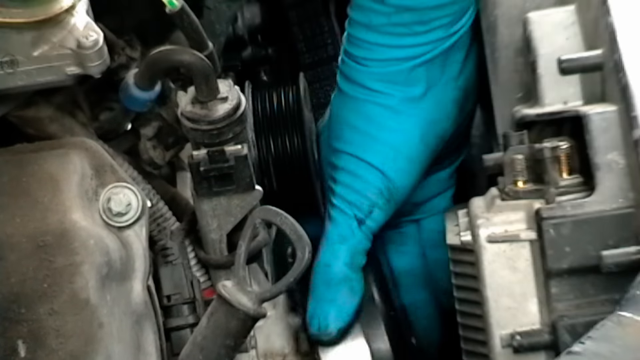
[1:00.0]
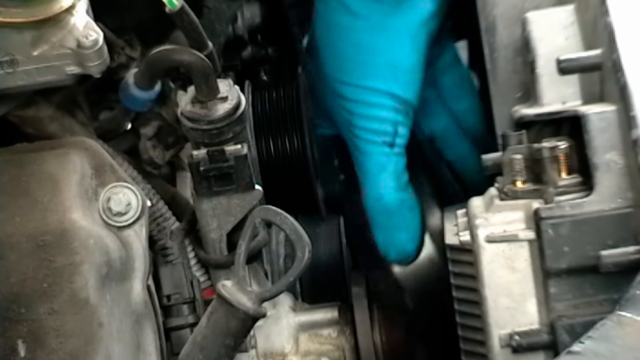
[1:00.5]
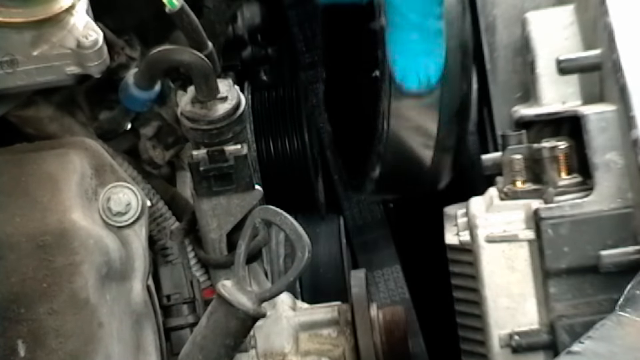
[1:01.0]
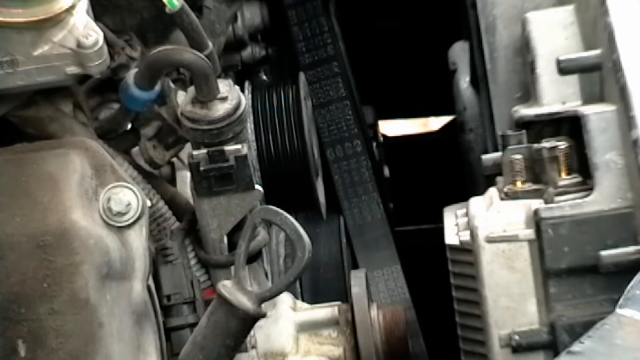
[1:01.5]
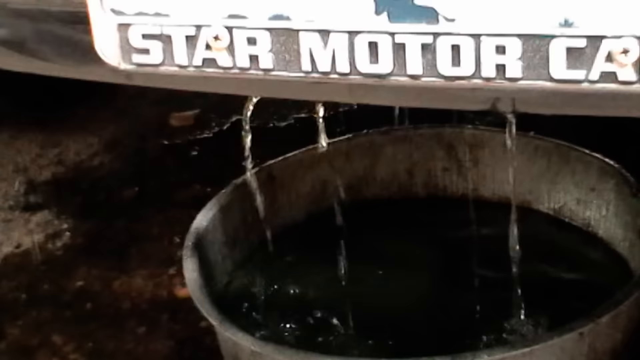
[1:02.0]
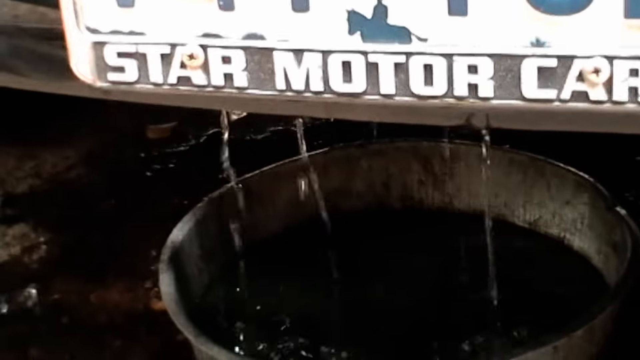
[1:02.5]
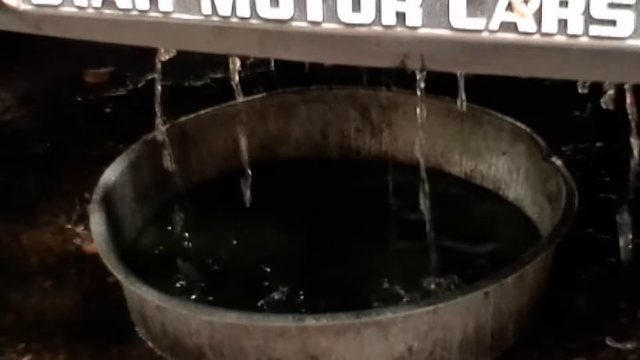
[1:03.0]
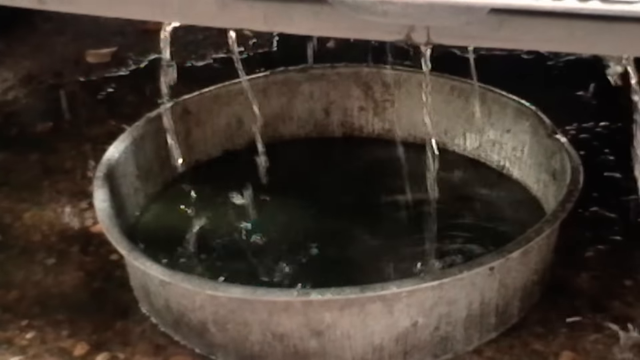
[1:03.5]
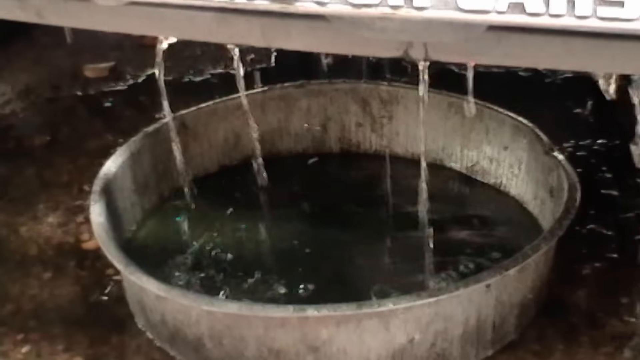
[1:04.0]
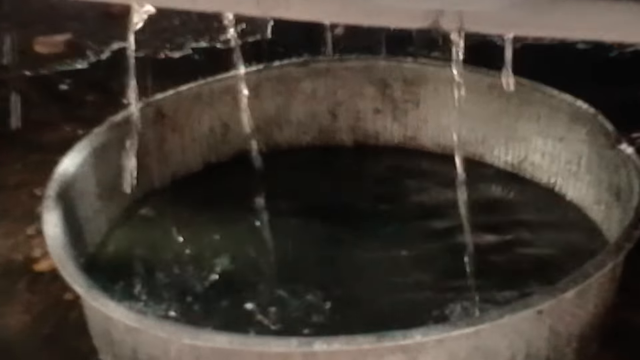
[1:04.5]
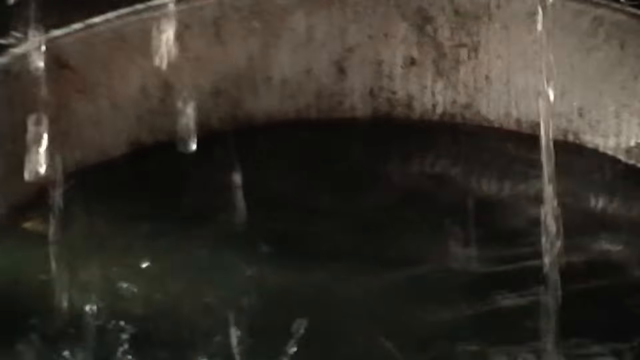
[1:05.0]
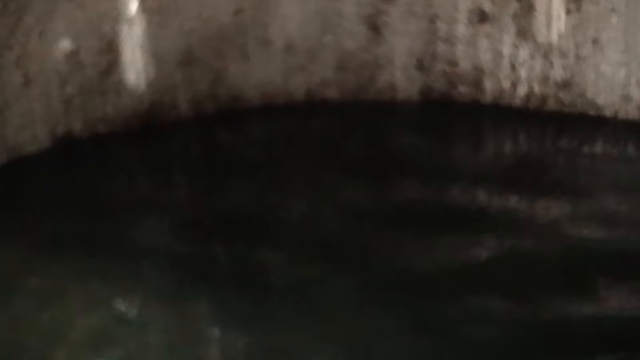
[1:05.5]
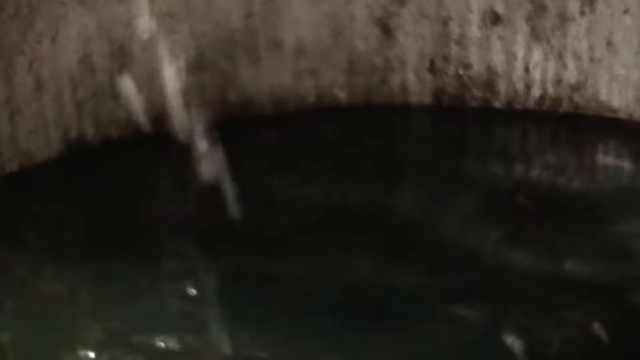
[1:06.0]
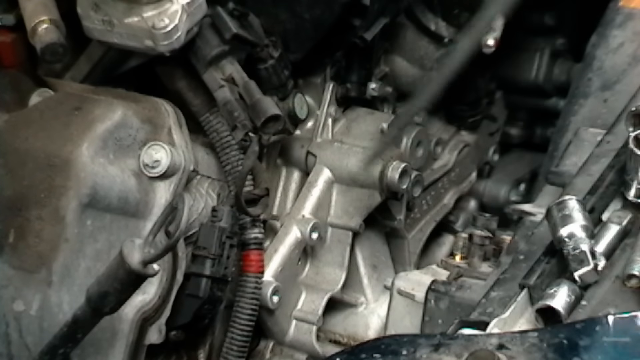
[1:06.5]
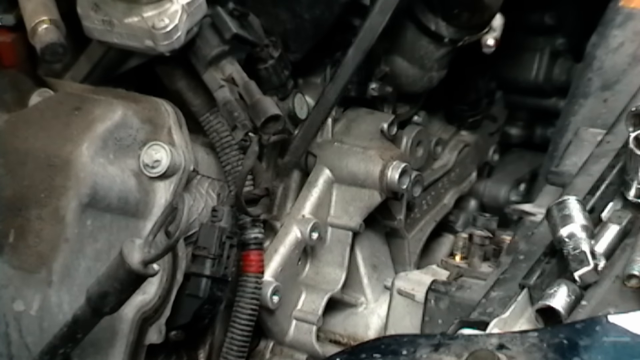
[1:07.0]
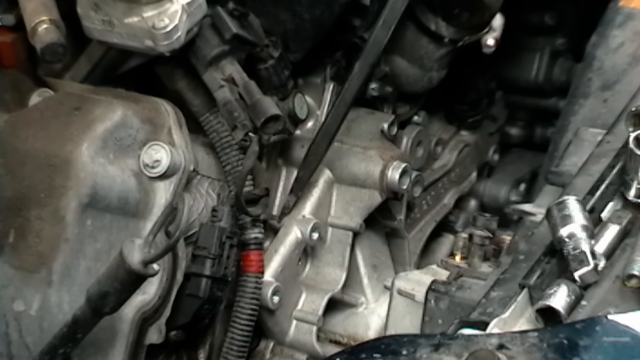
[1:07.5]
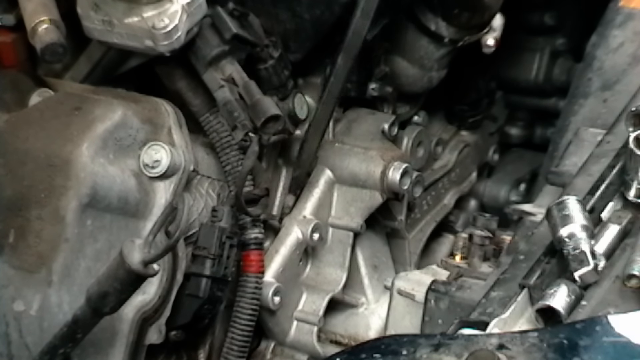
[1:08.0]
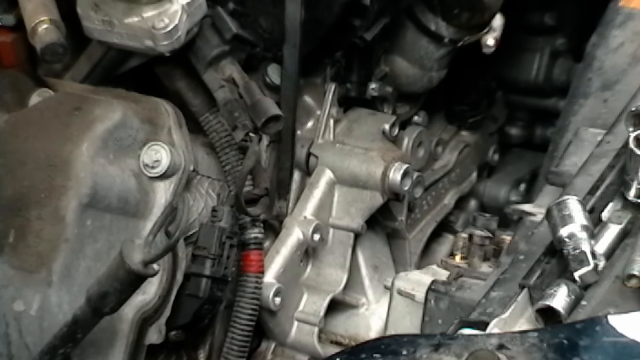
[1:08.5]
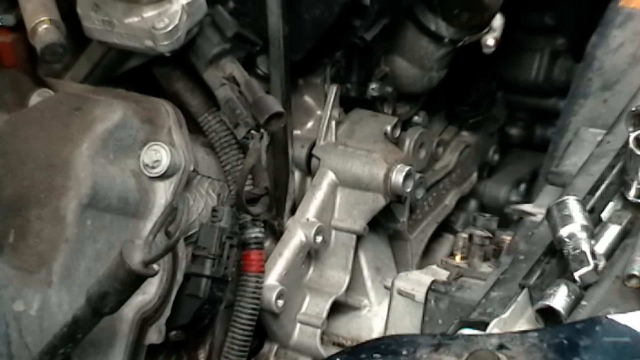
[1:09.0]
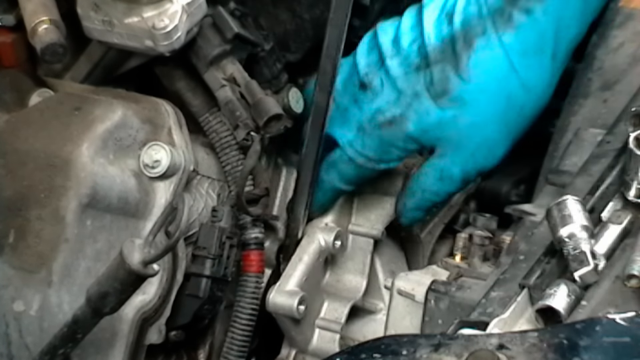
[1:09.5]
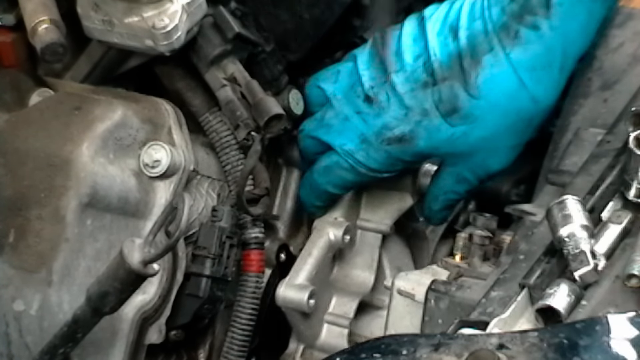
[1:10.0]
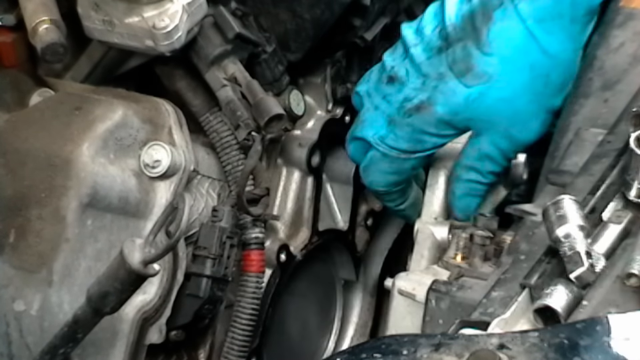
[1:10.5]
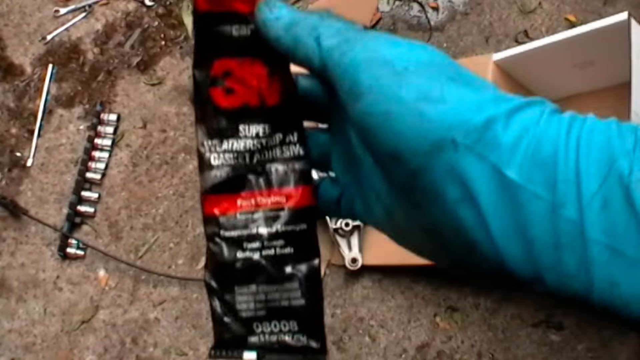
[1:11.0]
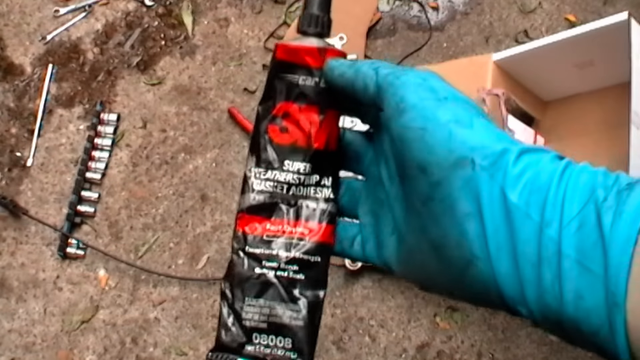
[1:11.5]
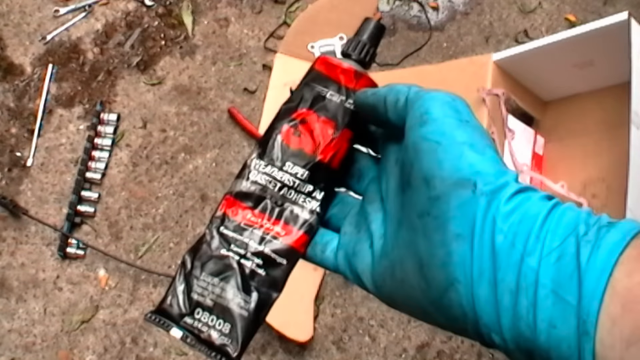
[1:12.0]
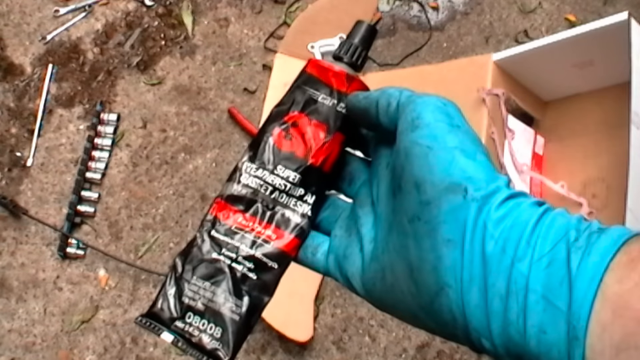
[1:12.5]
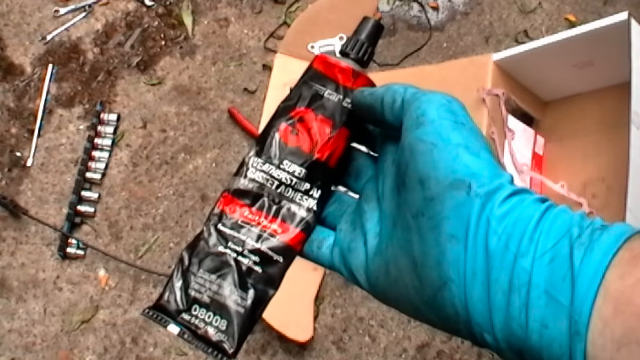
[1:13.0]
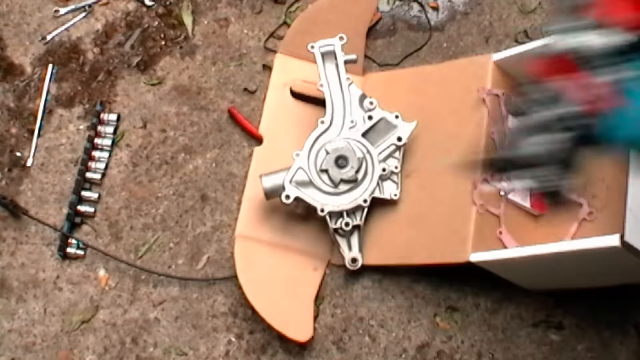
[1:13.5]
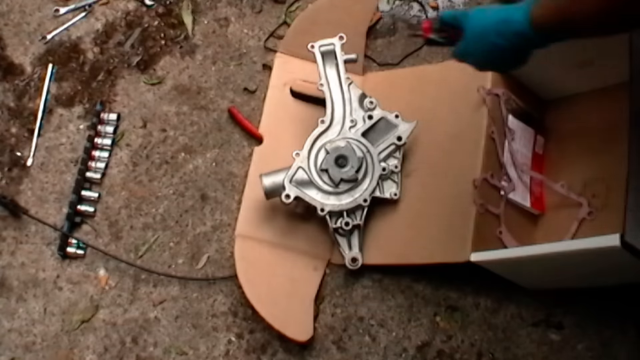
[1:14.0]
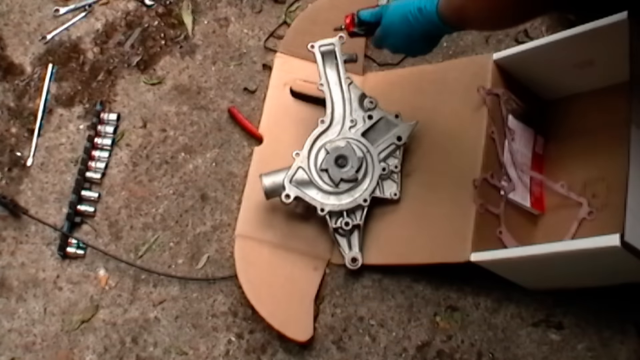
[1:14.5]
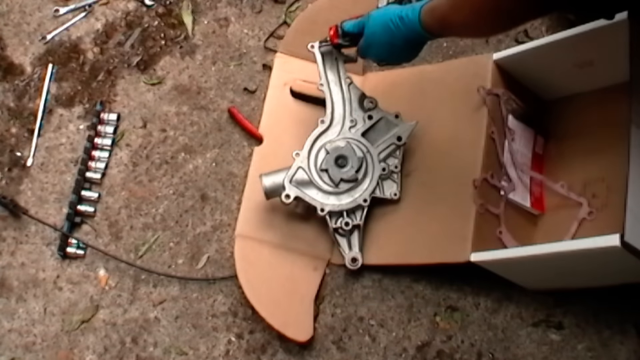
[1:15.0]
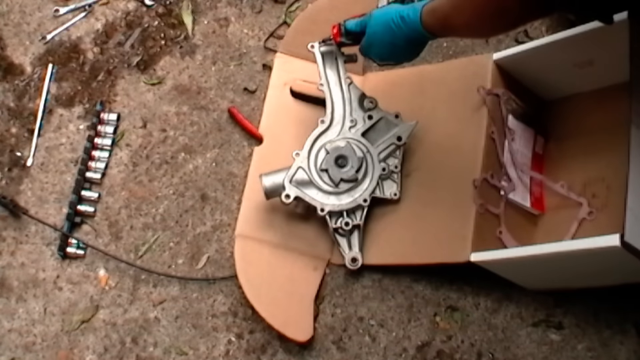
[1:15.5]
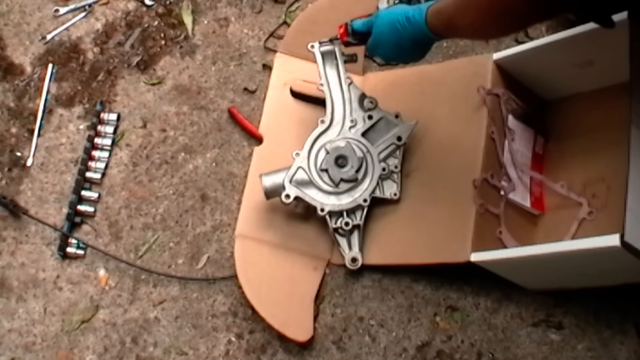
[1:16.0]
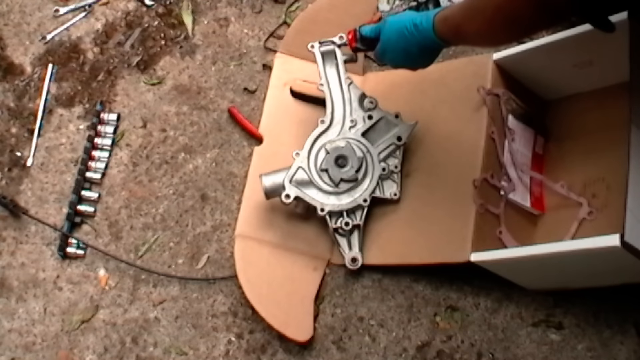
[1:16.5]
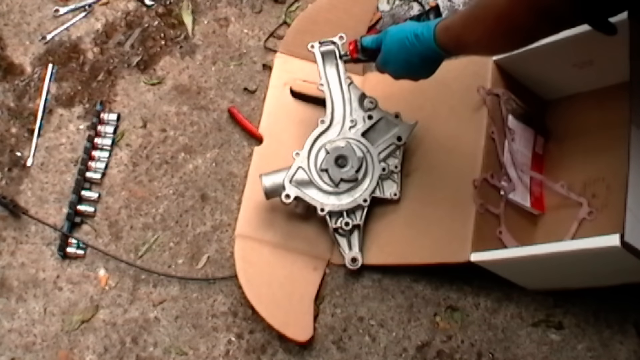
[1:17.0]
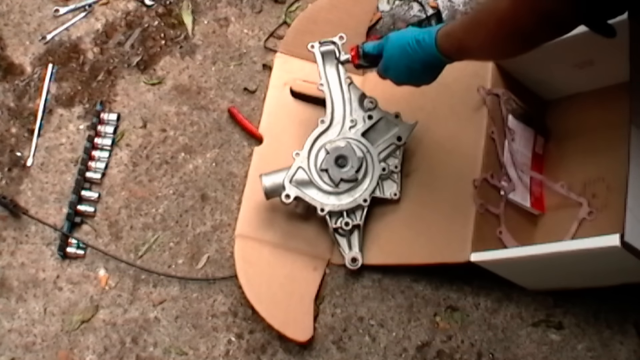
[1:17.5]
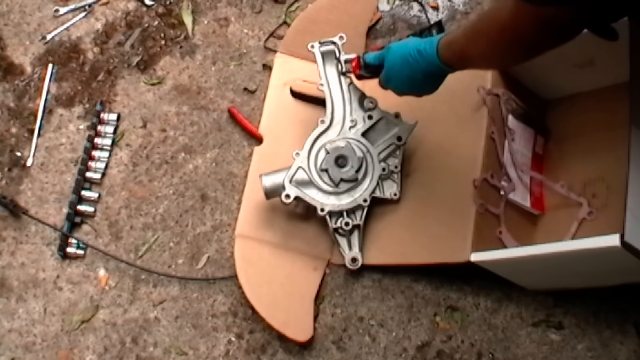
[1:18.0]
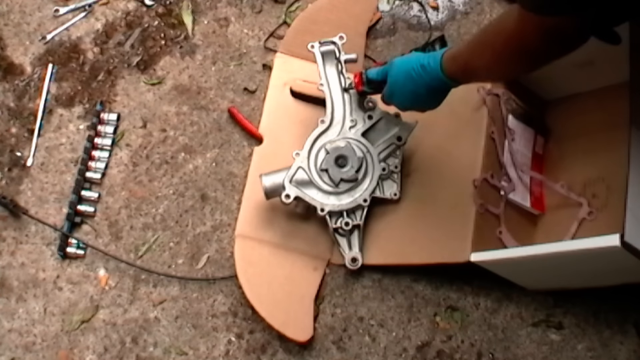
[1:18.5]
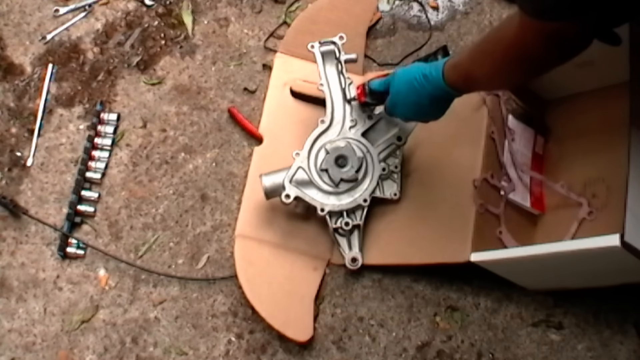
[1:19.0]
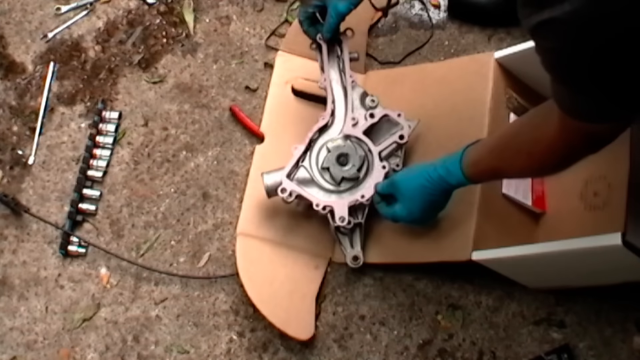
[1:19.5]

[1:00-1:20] Someone wearing a blue glove slowly removes a strap or metal piece from inside a vehicle, unwinding certain parts. Water or liquid seems to drip down from part of the vehicle into a drip pan, as if something has been loosened. The gloved person uses what looks like the head of a screwdriver to remove a silver part from the engine. A super adhesive in a red and black squeeze bottle with a black cap then comes into view and is shown to the camera. The removed silver part lies flat on the ground, and the adhesive, which is black, is slowly squeezed onto it, starting at the top and moving down, tracing the inside of the part. Something flat and silver is then placed on top, as if to stick the two together.